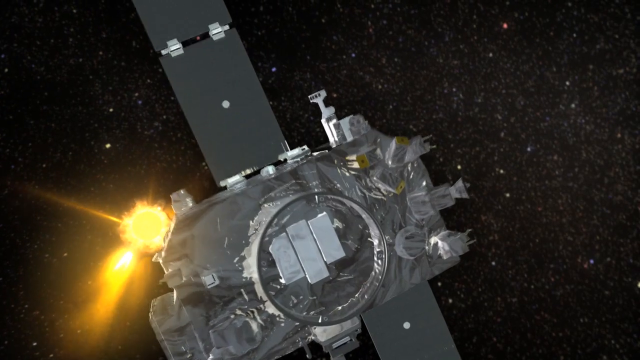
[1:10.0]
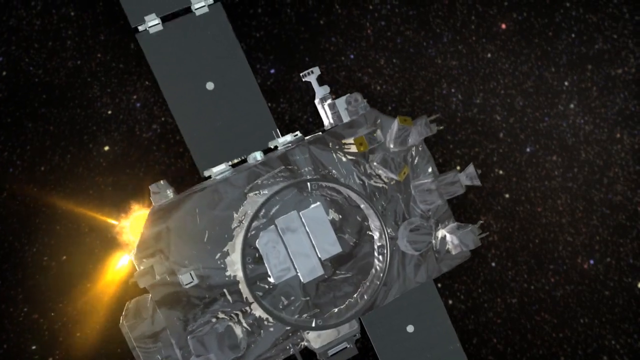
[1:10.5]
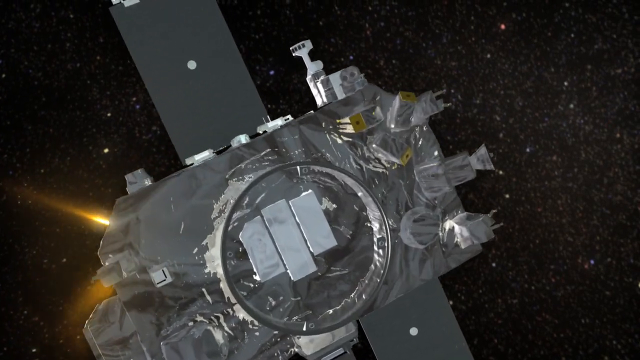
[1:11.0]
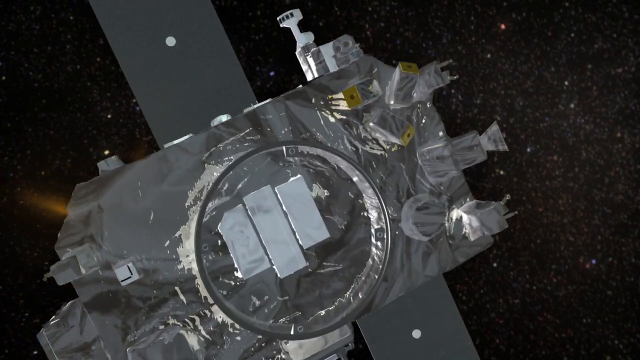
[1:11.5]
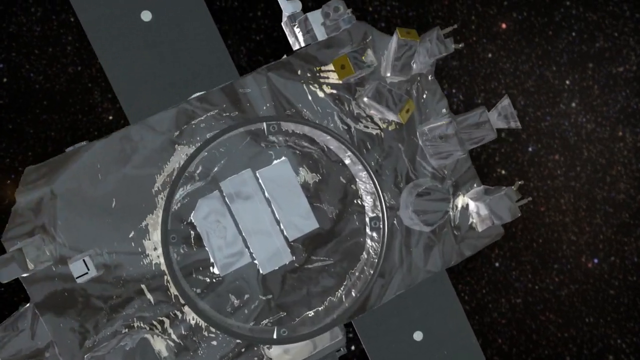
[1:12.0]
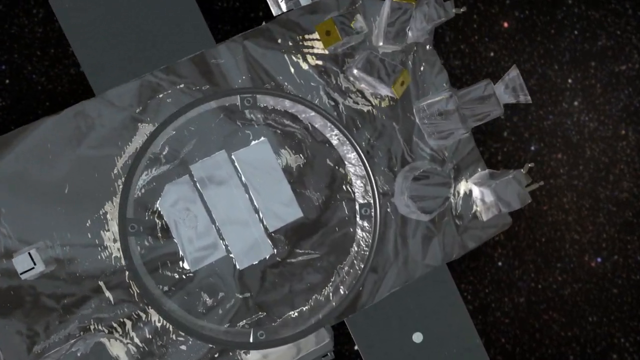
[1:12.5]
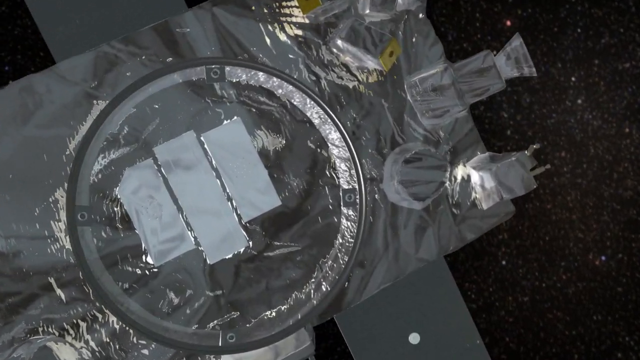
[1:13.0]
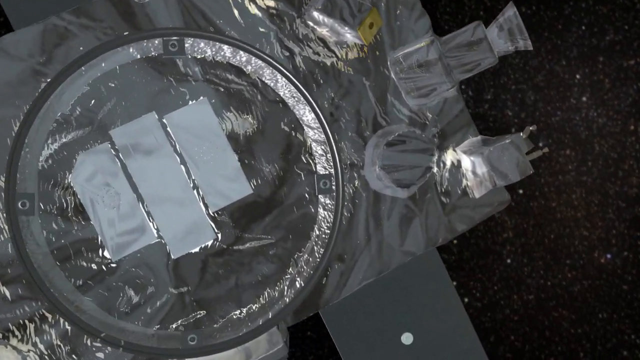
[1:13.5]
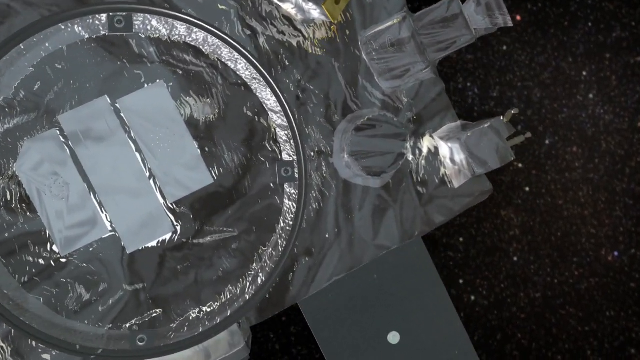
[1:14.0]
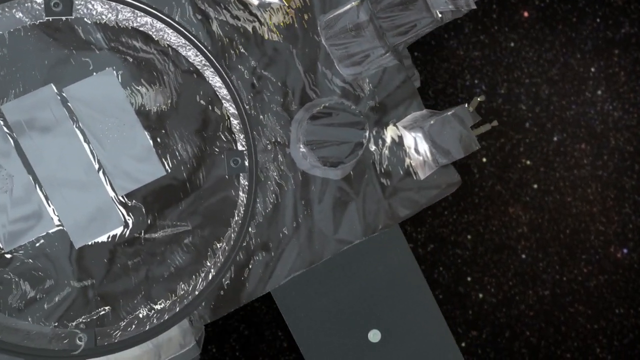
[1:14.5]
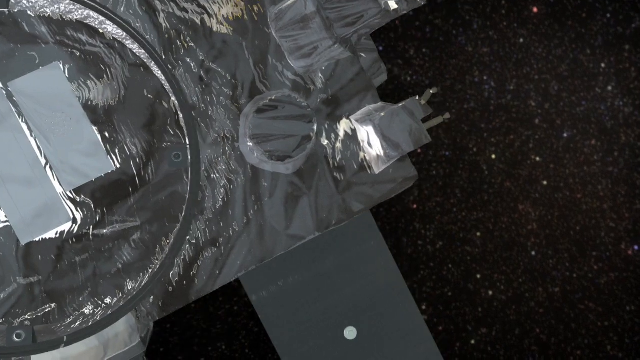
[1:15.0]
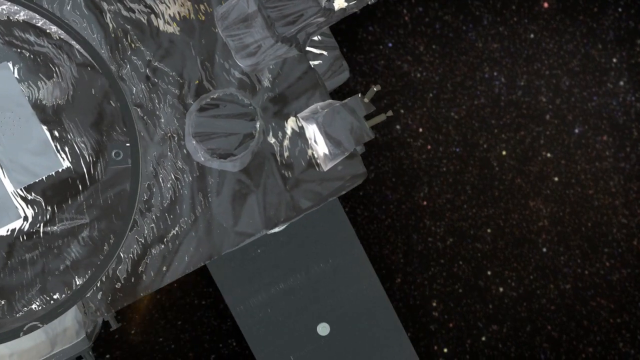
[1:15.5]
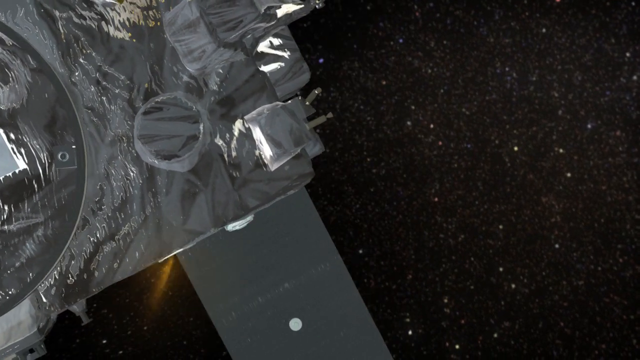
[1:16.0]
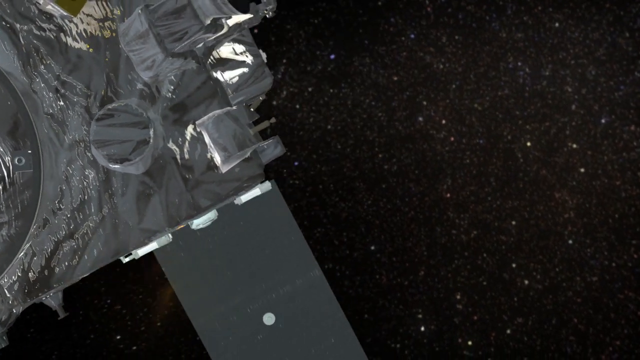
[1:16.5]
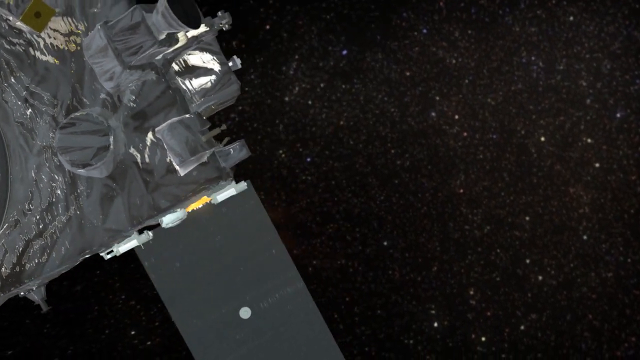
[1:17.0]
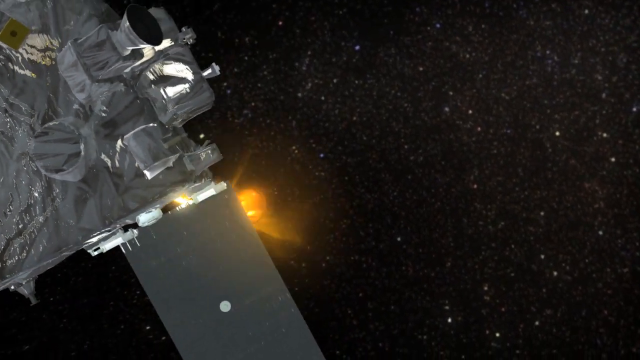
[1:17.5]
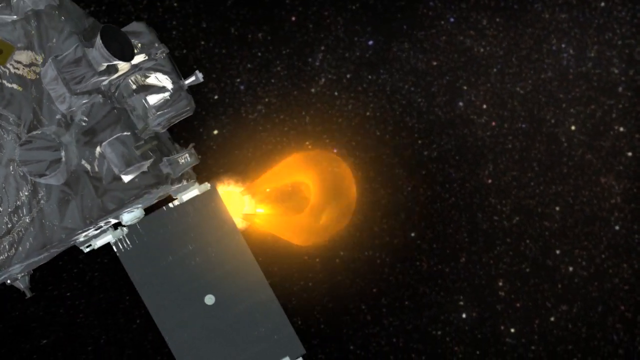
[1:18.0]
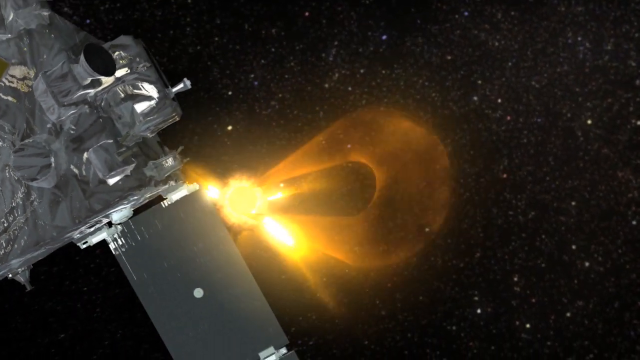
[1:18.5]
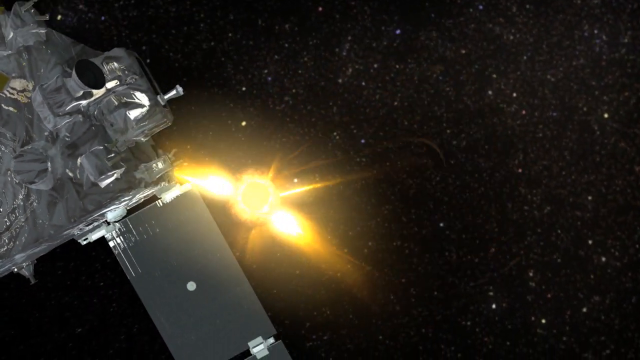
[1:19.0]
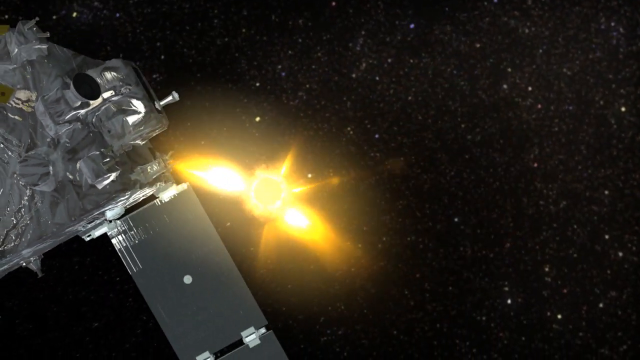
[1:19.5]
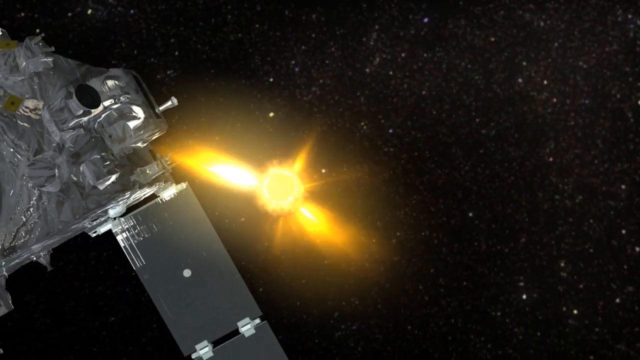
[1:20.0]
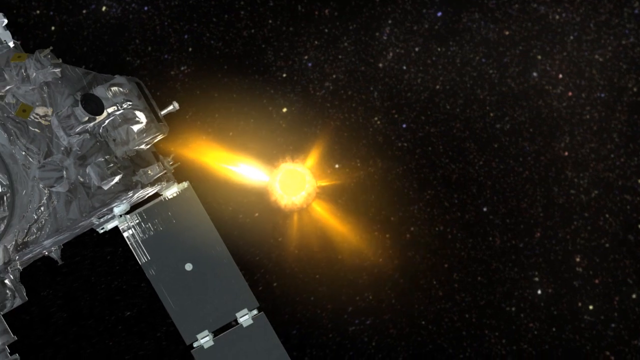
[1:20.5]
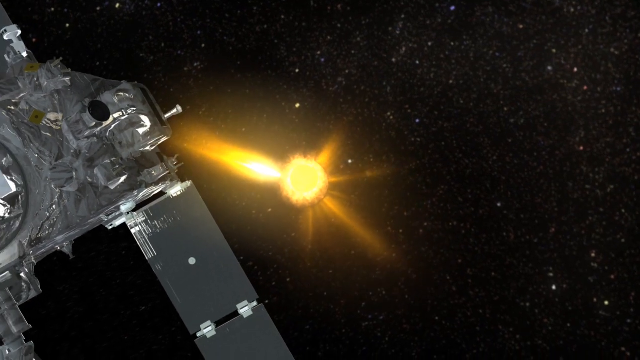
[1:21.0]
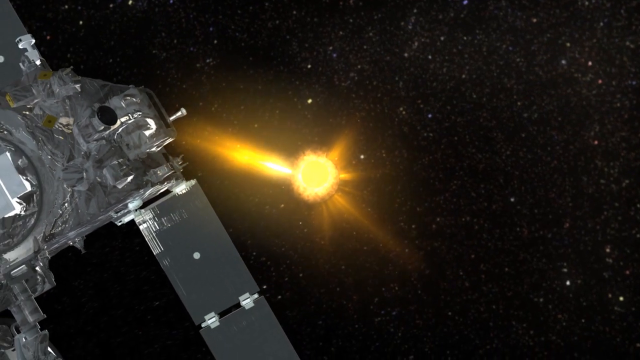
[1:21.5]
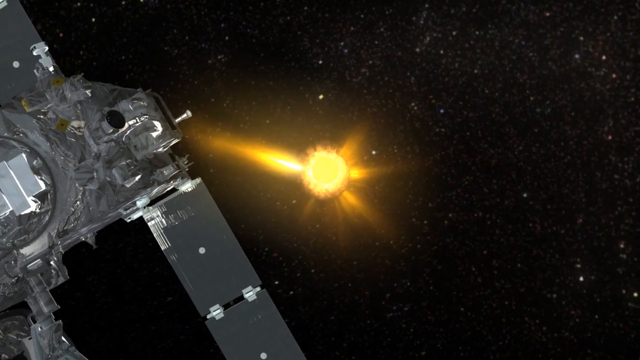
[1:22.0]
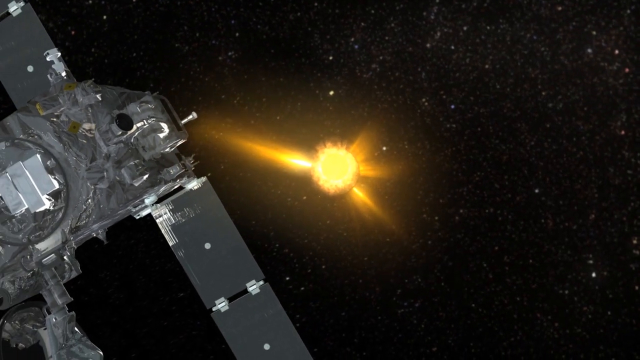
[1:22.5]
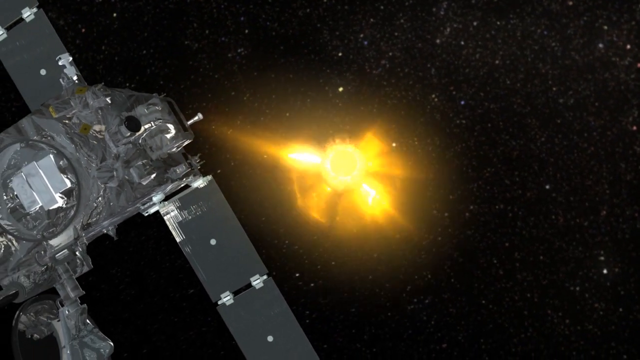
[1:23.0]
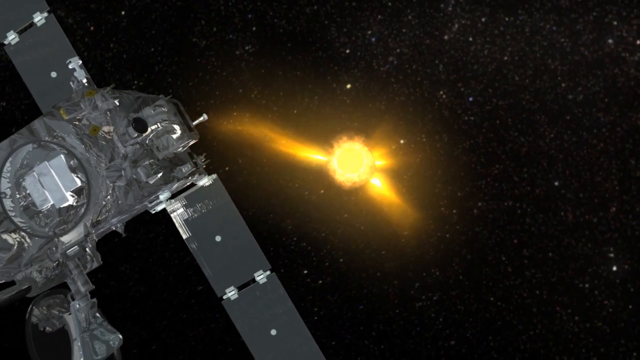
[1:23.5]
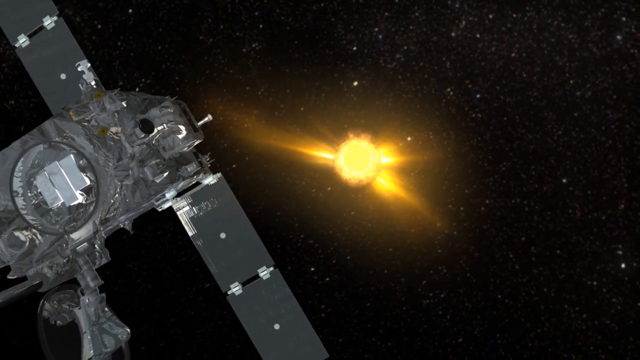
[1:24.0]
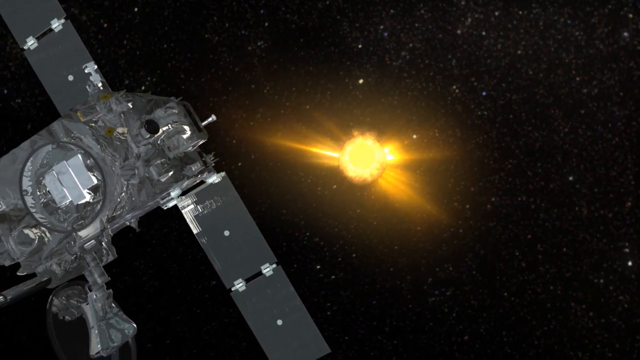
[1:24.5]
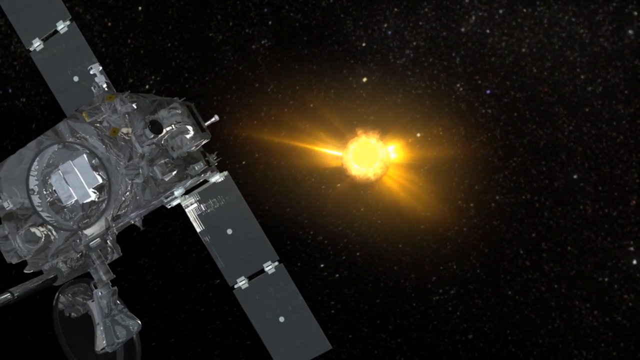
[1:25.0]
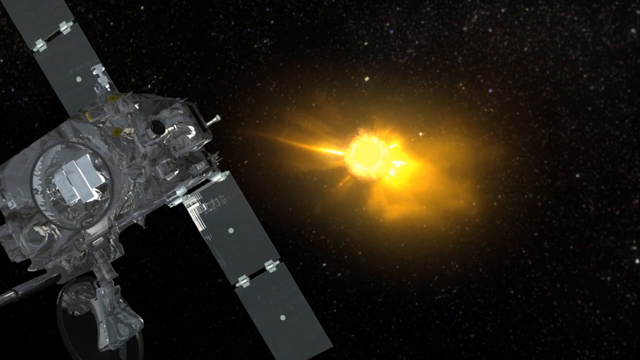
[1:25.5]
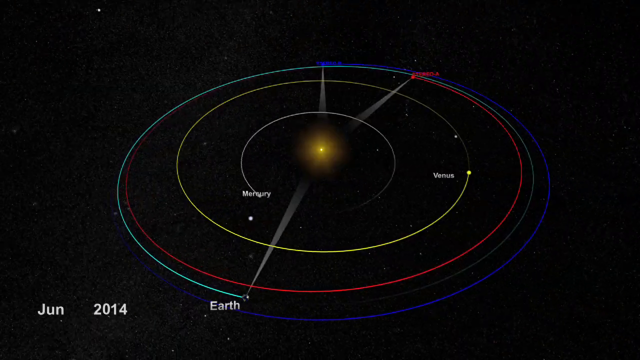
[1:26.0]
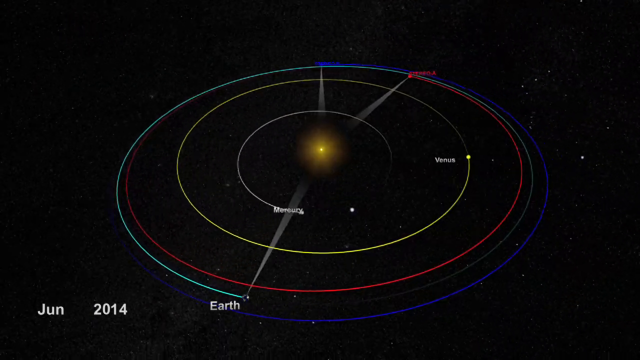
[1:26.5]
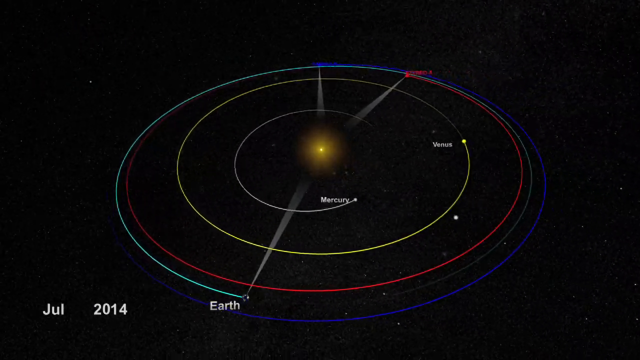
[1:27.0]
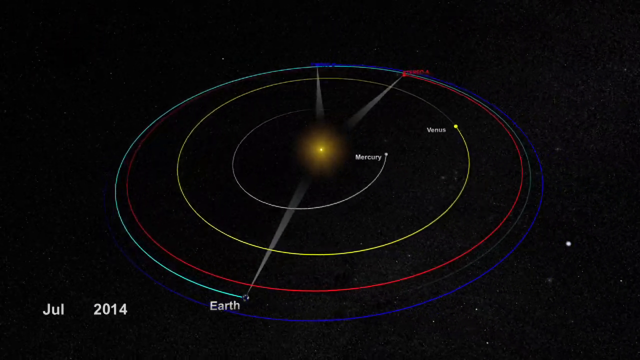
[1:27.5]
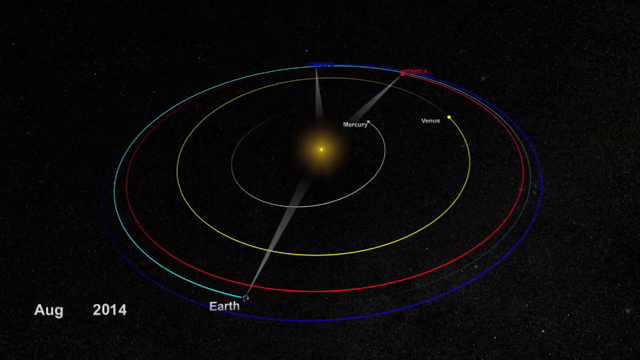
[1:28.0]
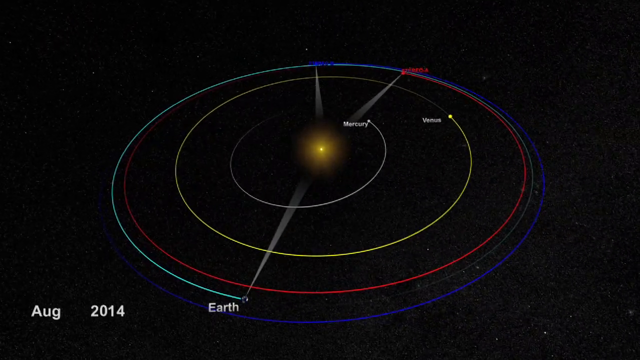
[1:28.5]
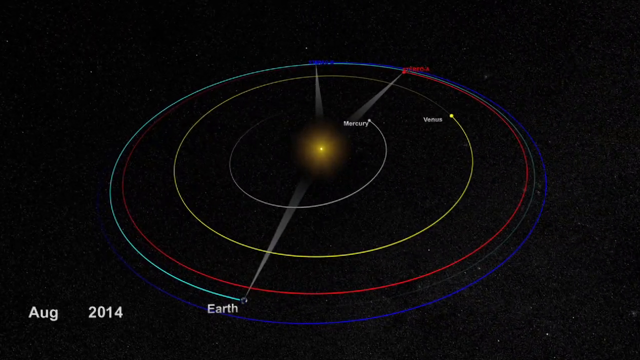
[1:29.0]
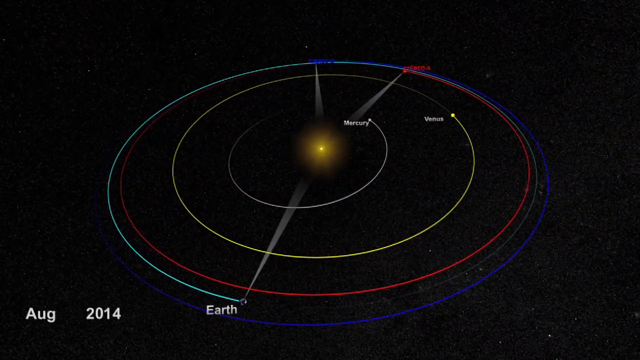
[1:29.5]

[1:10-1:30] A 3D rendition of a satellite is shown zoomed in. The view slowly zooms in on the back end of the satellite, which seems to be covered with some kind of foil and metal. It zooms back out, showing a large sunburst coming from the sun in the distance, backlit by black space filled with white stars. The video cuts to a 3D rendering of the solar system: Mercury, Venus and Earth slowly go around the sun, and two satellites, labeled in red and blue, stay on the opposite side from Earth, forming a triangle. All the objects in the system turn counterclockwise. Large white beams come from the two satellites at the top and from Earth, pointing towards the Sun. Mercury spins the fastest and Venus second fastest, while Earth maintains the same speed as the satellites, keeping the Sun between them.